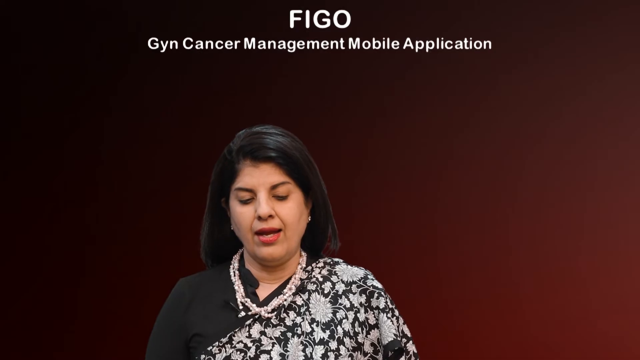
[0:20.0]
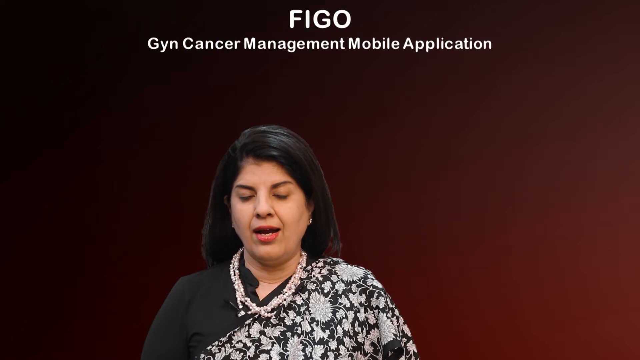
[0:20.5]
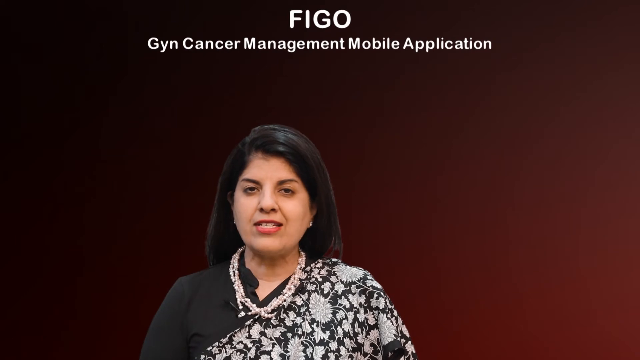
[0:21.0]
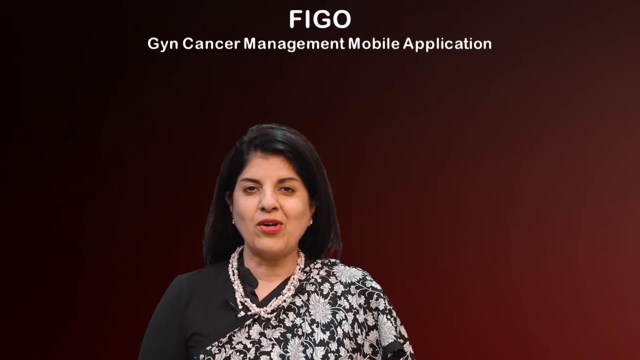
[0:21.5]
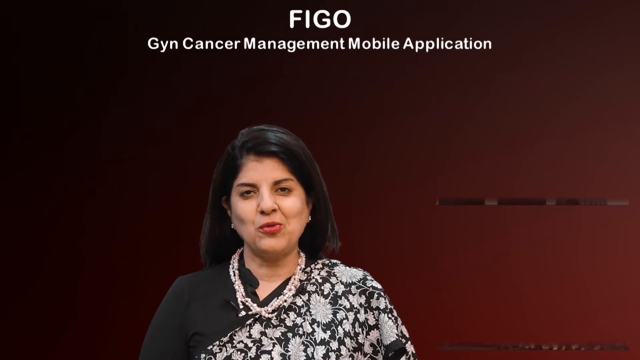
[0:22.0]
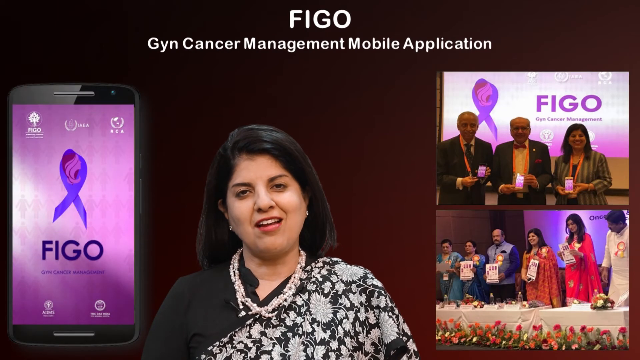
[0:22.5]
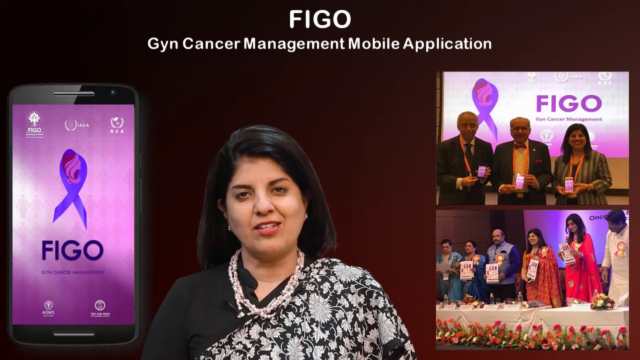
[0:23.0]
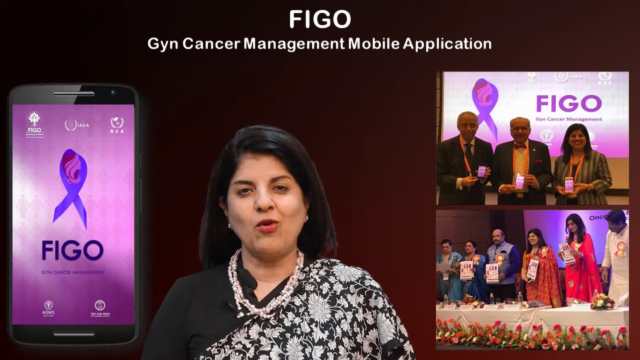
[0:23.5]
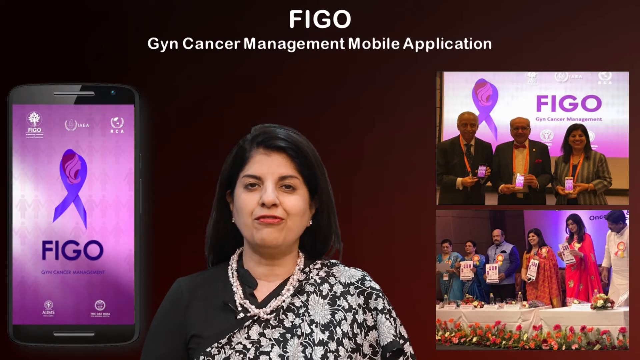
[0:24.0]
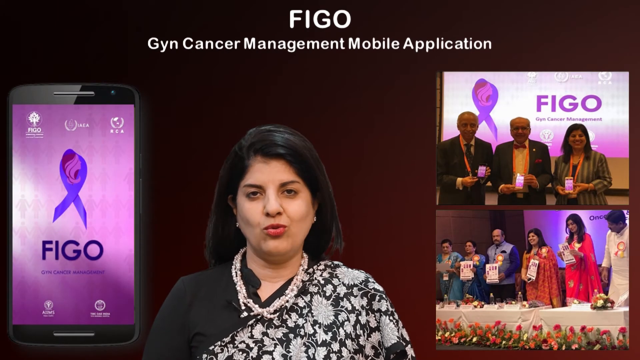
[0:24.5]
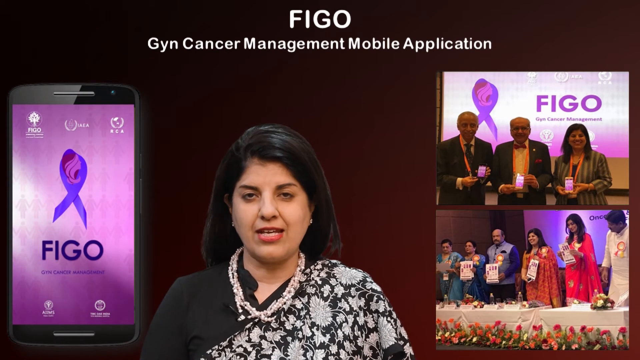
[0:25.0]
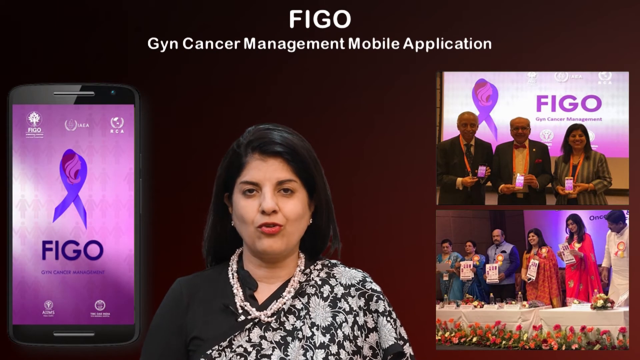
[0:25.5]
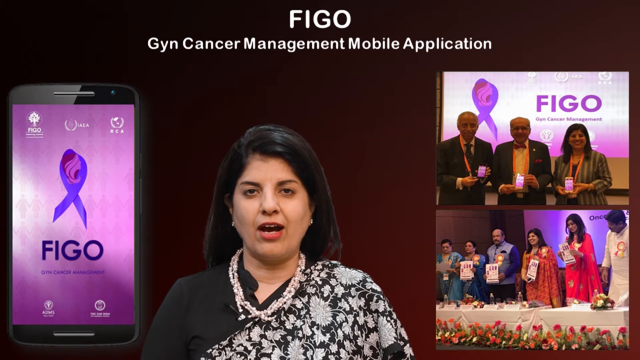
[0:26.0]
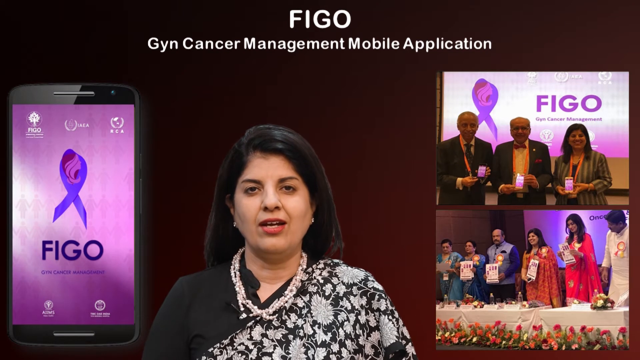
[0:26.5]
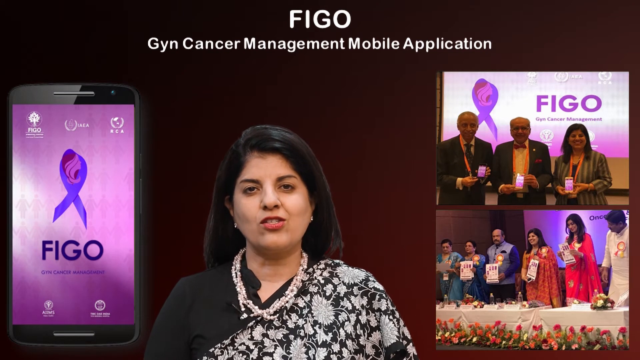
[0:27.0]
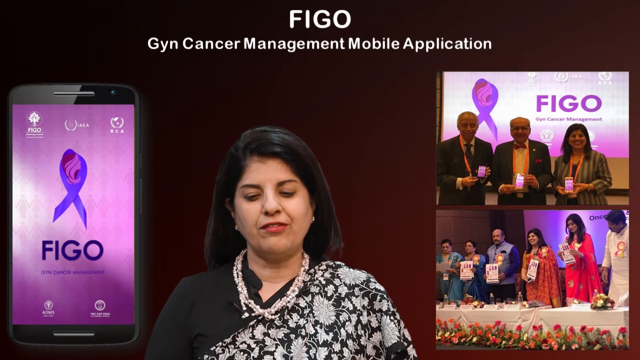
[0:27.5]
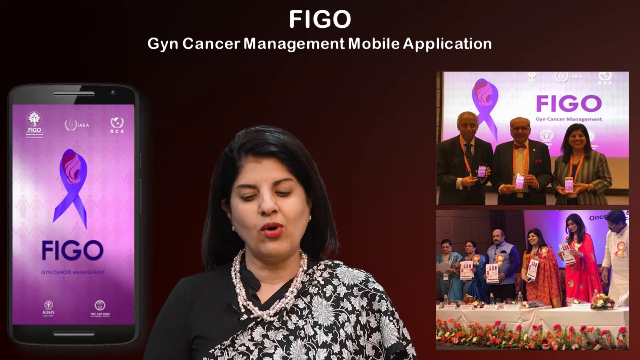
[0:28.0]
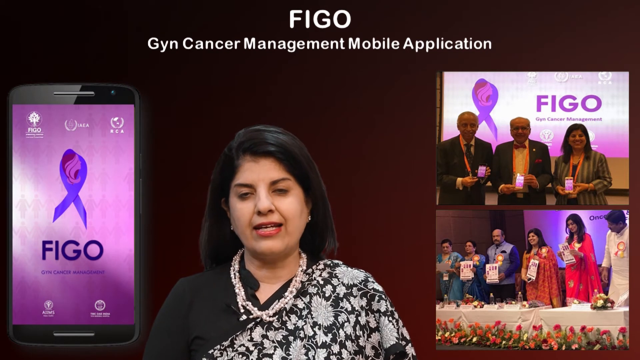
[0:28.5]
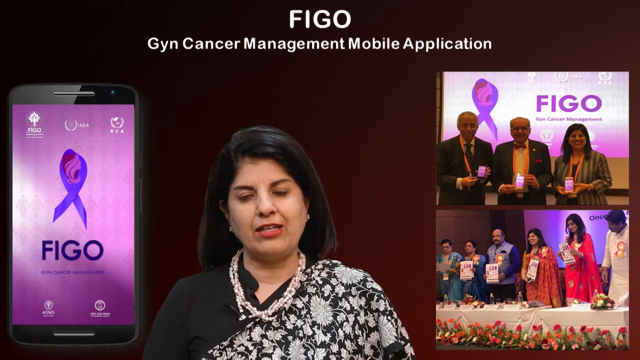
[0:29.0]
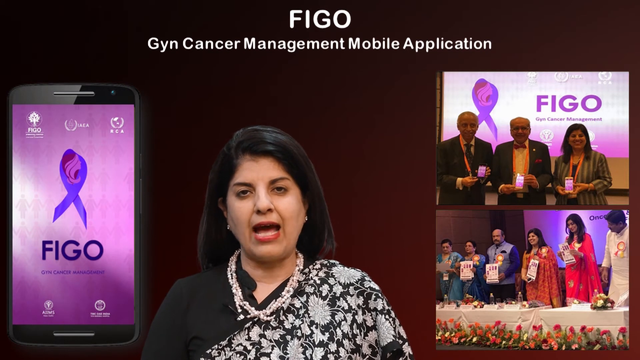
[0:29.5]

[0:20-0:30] The woman is now in the center of the screen. At the top, in white lettering, is the word "FIGO", a cancer management mobile application. To the left, the mobile app appears to be shown: a picture of a phone with a bright purple screen and a darker purple ribbon as a logo, with the word underneath. To her right is what appears to be a television screen with a photo of three individuals who appear to be at a conference, posing for a photo, and another photo on the bottom of women and men possibly at a dinner or some sort of ceremony. She continues to talk.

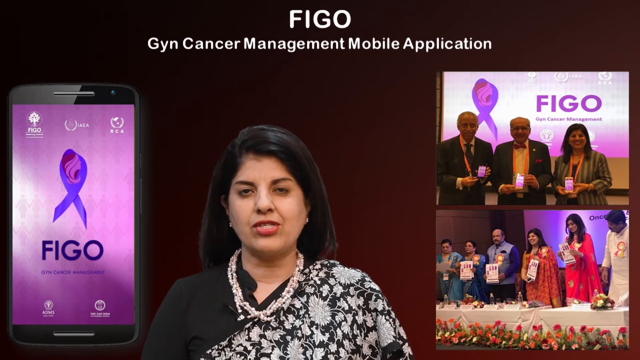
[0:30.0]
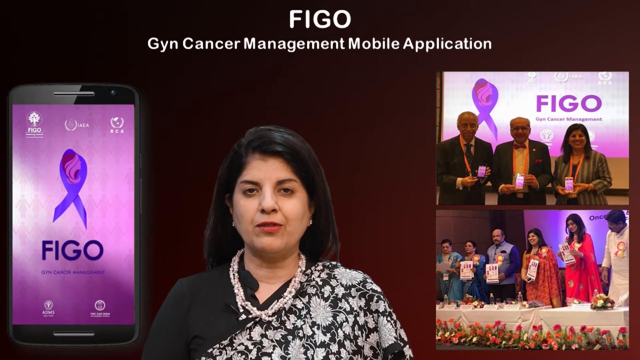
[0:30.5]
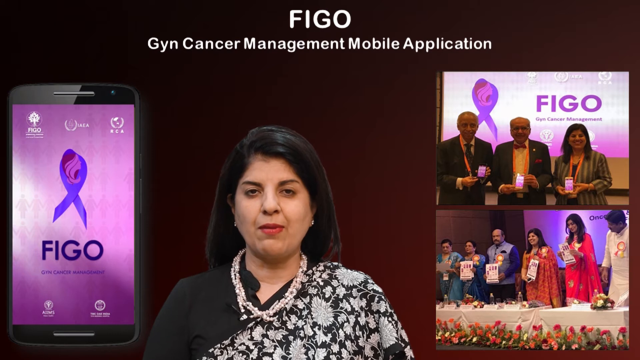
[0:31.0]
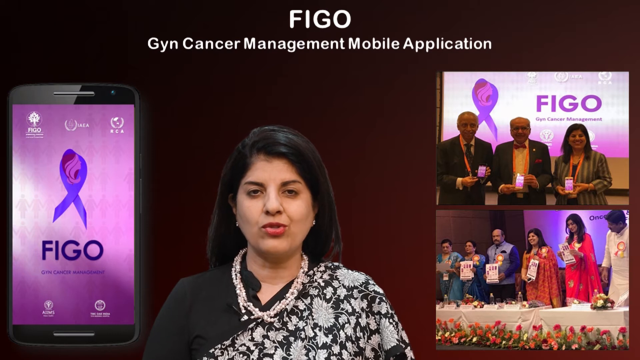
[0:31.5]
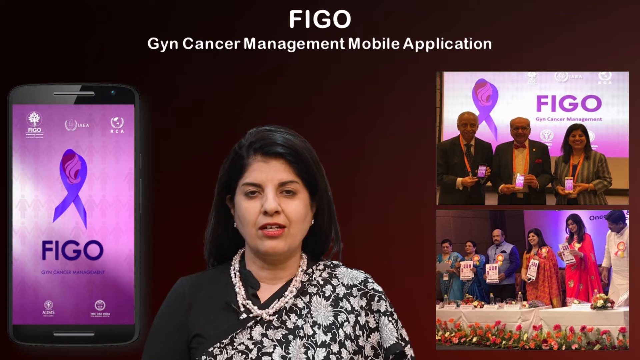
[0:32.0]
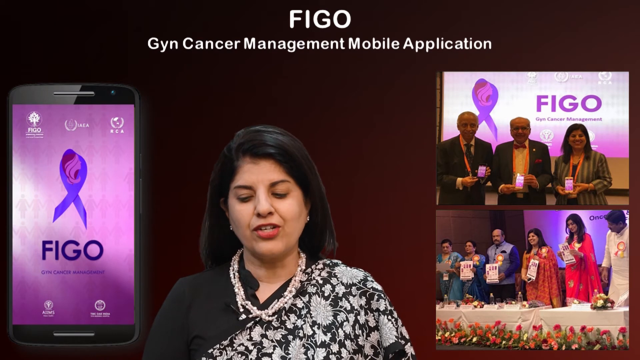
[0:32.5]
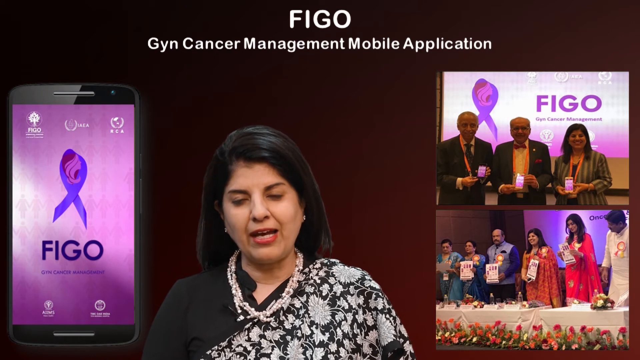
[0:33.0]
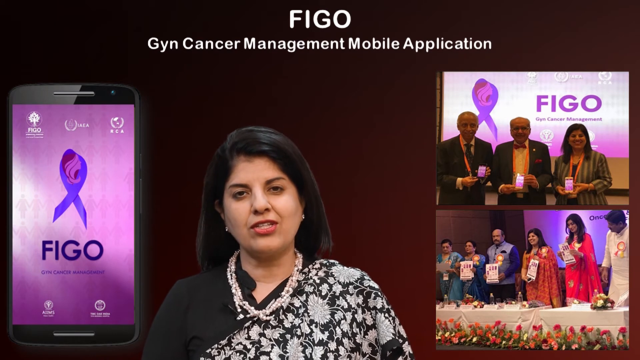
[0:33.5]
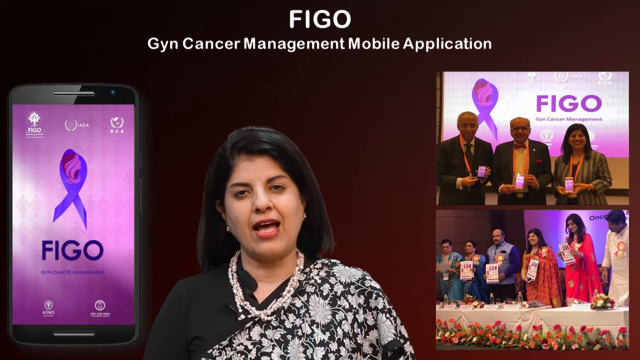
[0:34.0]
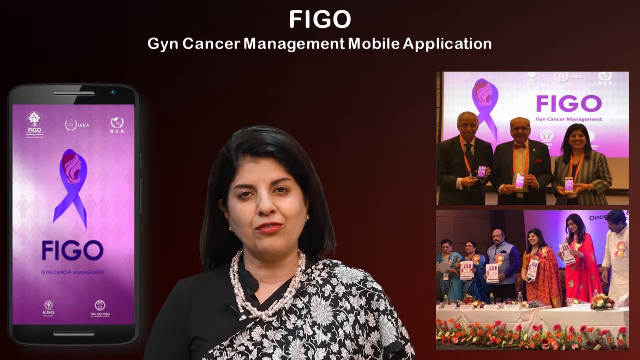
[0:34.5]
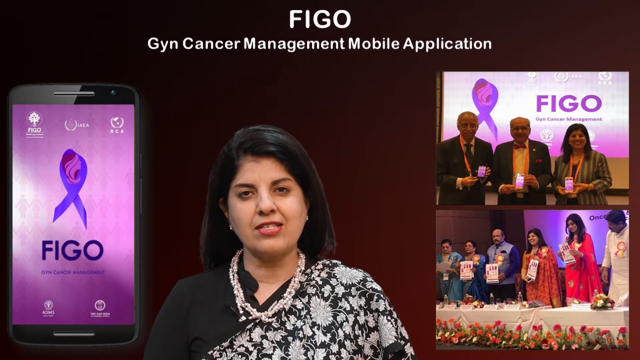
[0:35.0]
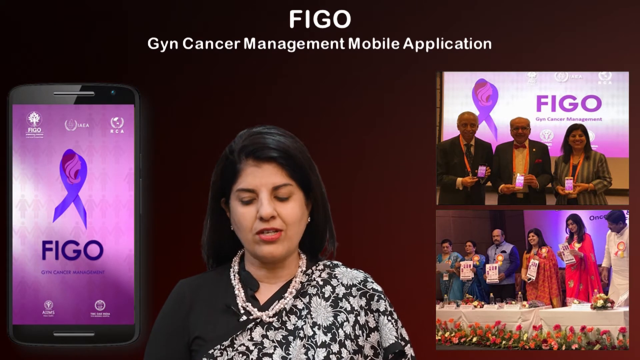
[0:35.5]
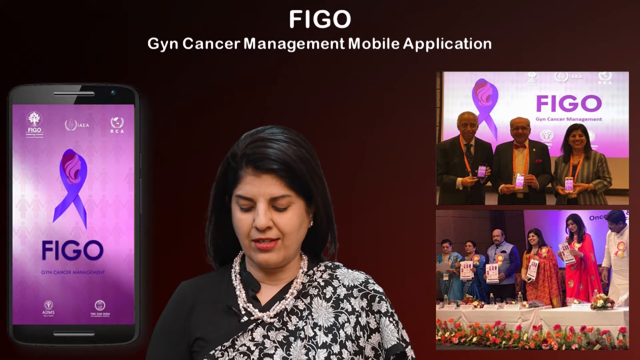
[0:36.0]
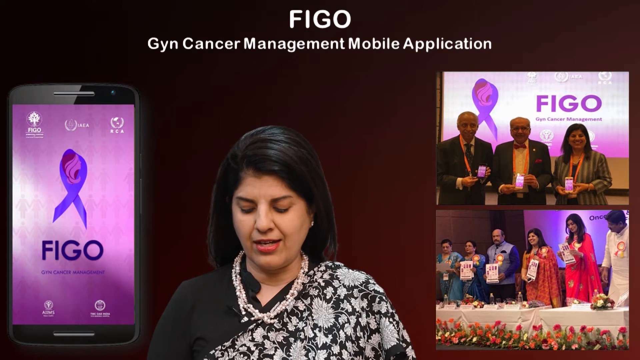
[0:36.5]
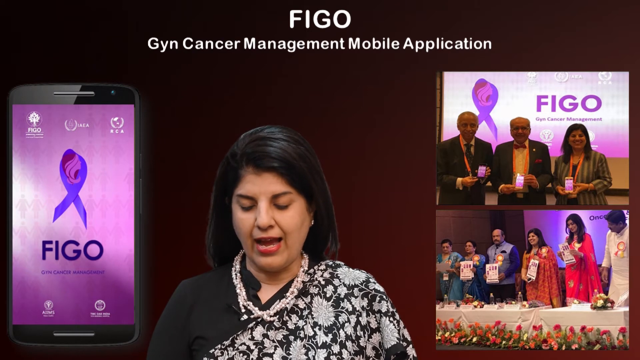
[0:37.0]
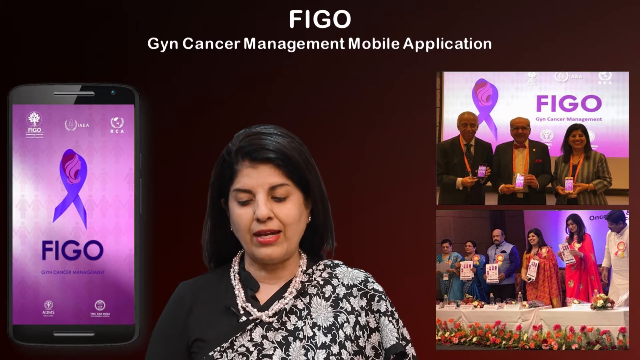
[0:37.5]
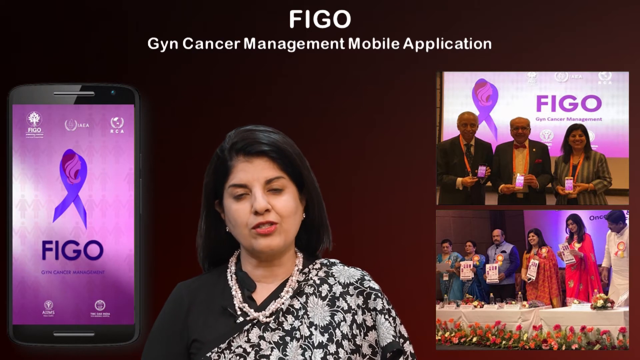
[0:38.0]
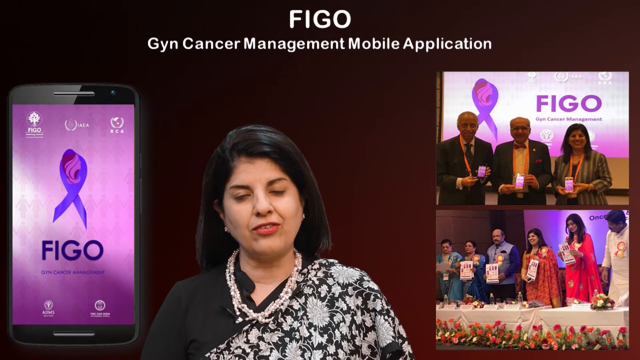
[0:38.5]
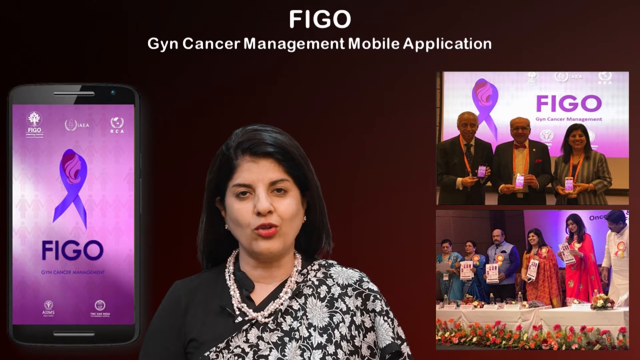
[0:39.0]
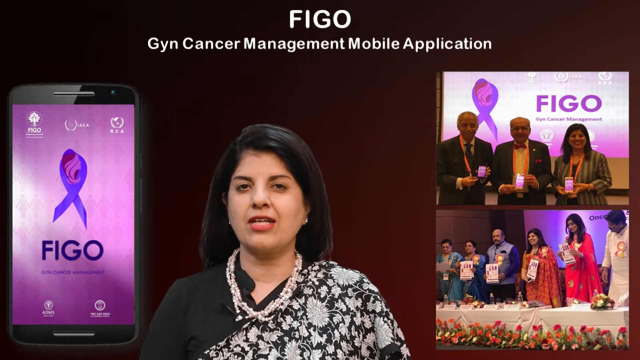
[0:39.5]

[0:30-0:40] The woman is in the middle of the screen and appears to be talking about the cancer management mobile application FIGO. To the left is what appears to be a smartphone screen showing the application, with the dark purple ribbon and some white text toward the top. On the right are two pictures that look like a split-screen television: above are three women, and below is what appears to be a ceremony or some sort of dinner, possibly showing the founders of the application.